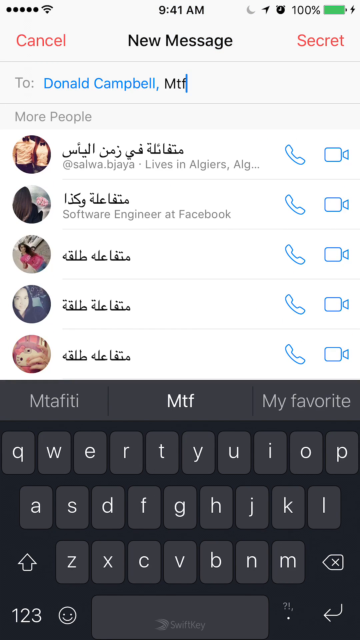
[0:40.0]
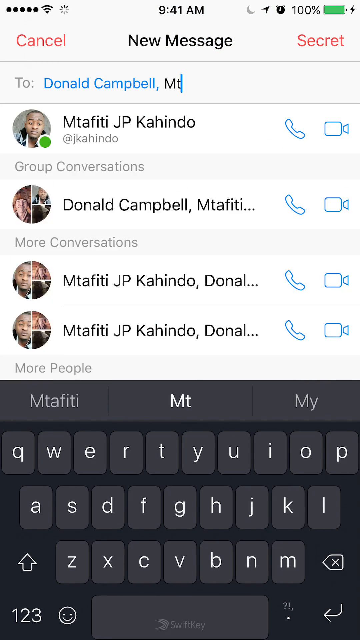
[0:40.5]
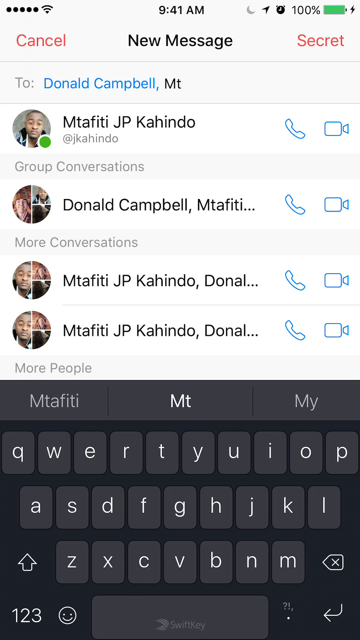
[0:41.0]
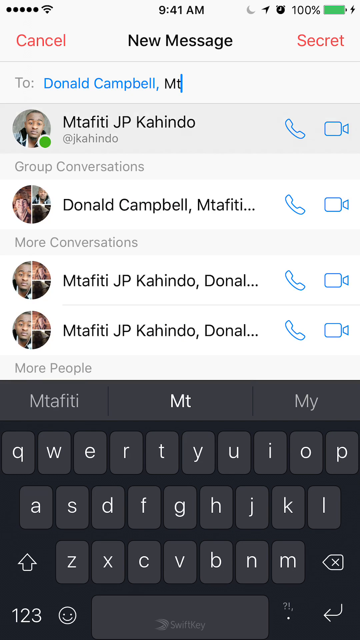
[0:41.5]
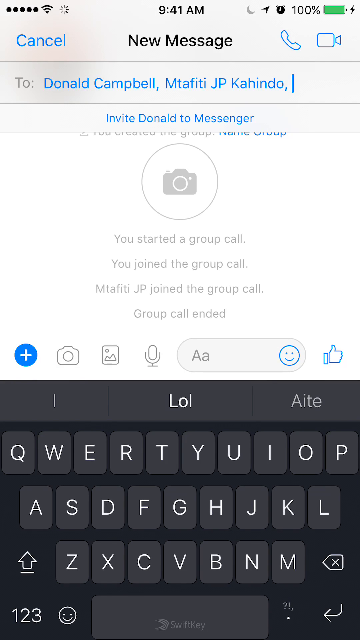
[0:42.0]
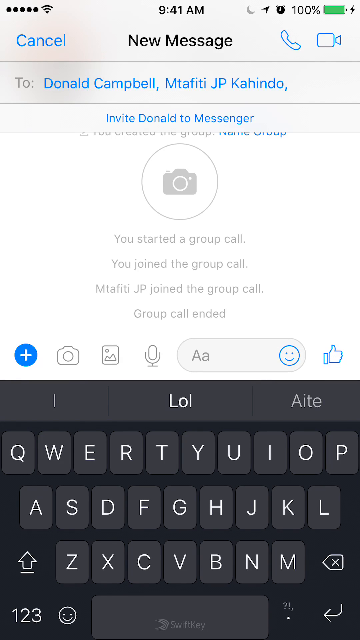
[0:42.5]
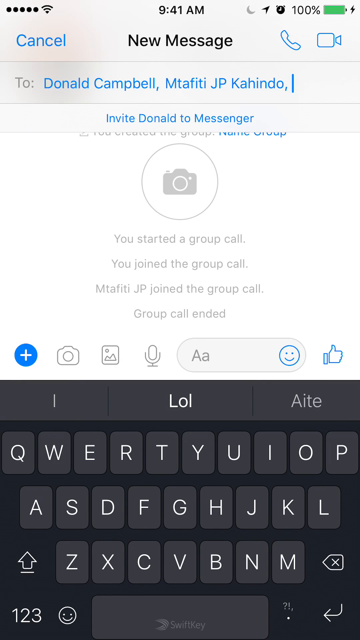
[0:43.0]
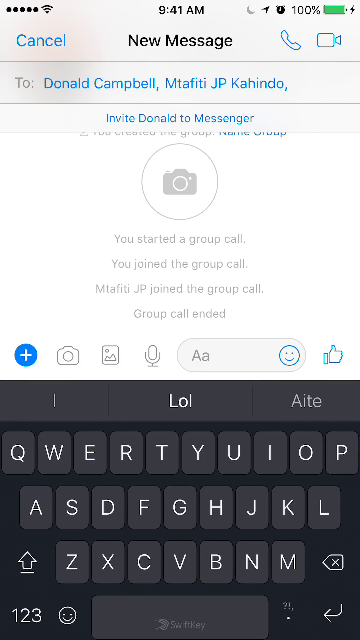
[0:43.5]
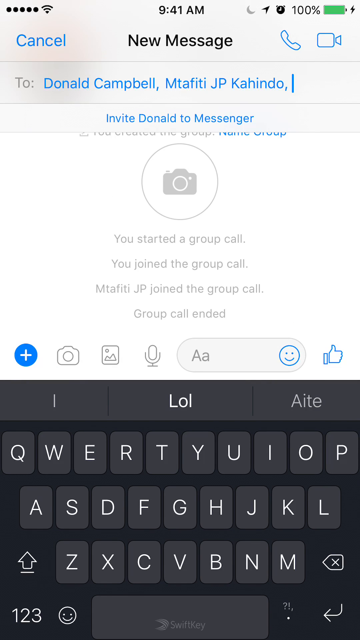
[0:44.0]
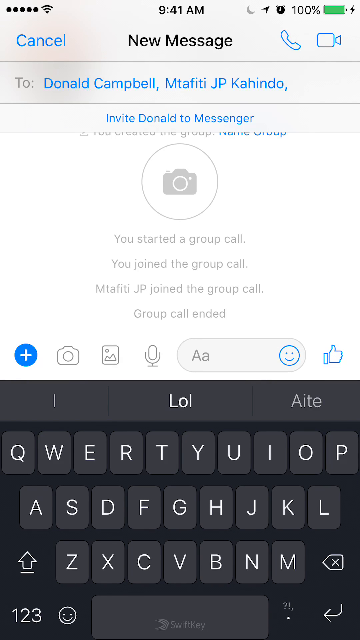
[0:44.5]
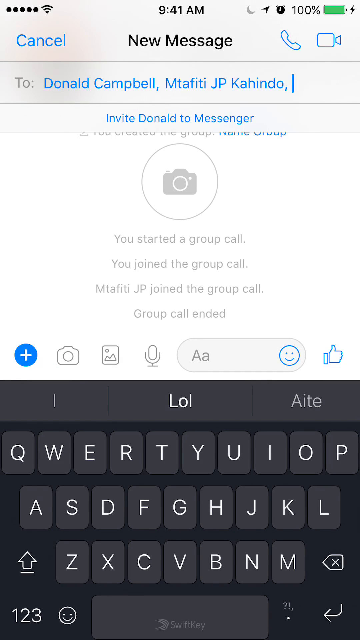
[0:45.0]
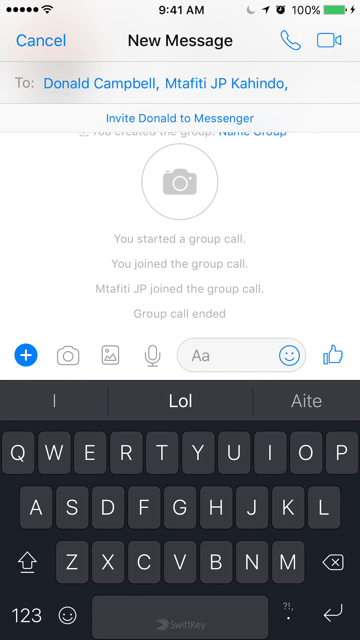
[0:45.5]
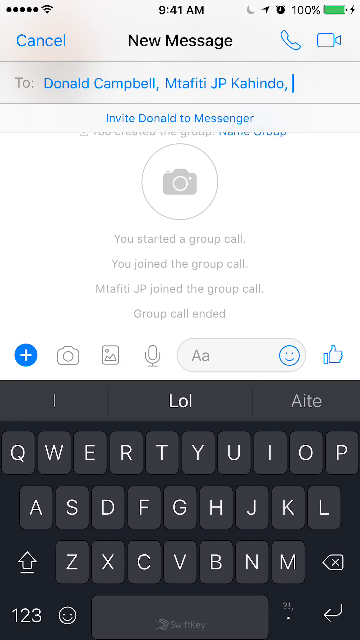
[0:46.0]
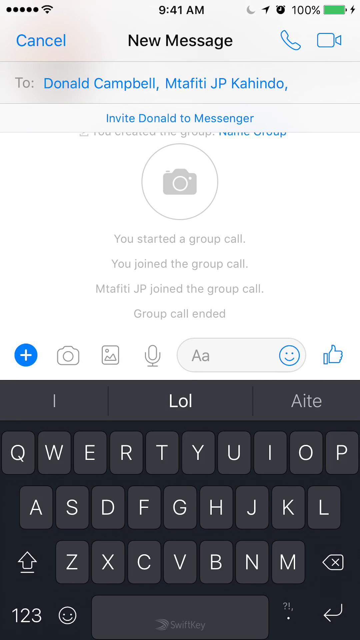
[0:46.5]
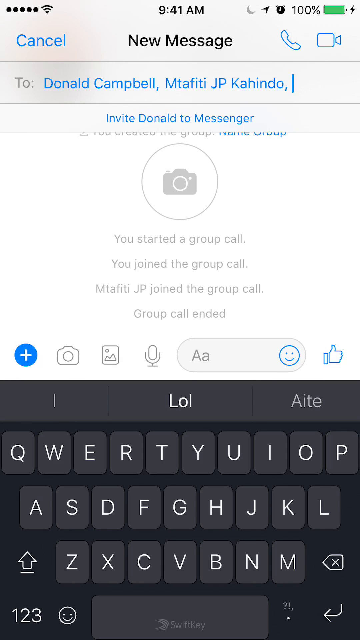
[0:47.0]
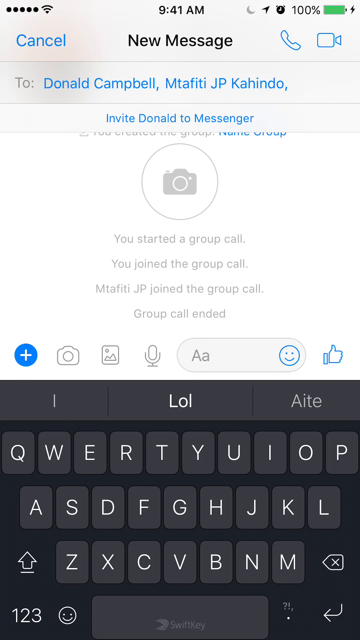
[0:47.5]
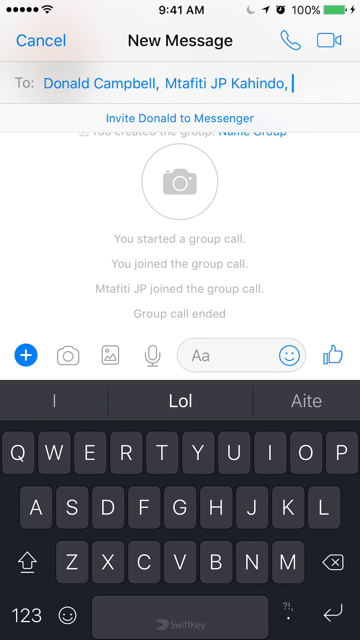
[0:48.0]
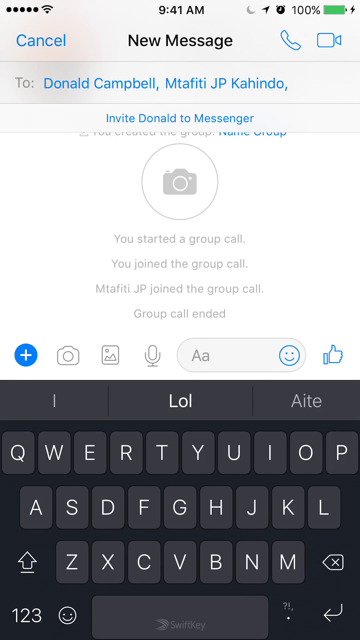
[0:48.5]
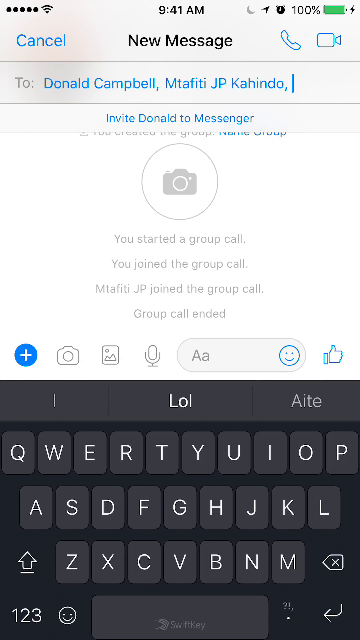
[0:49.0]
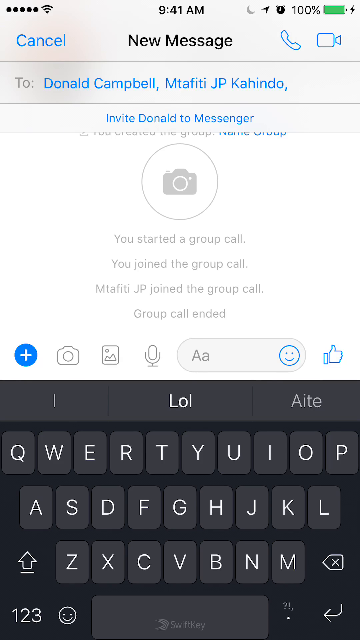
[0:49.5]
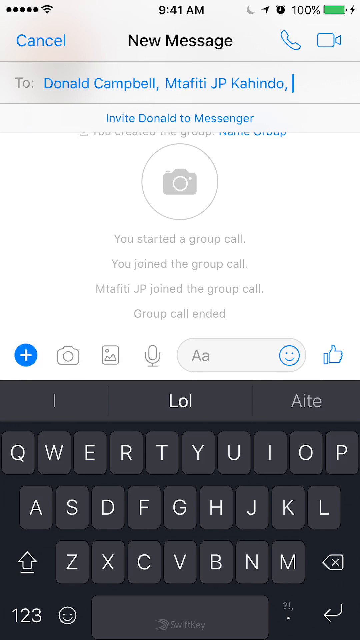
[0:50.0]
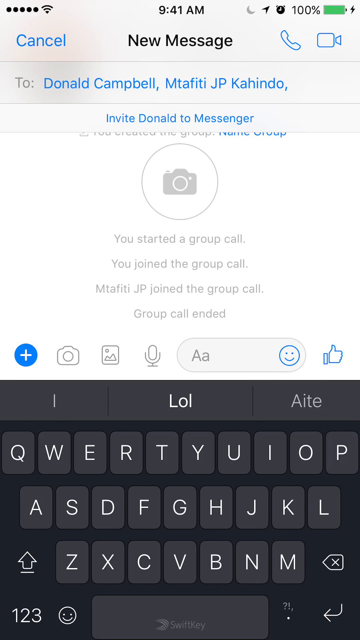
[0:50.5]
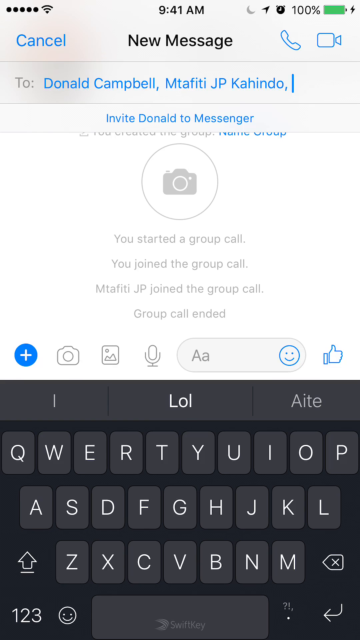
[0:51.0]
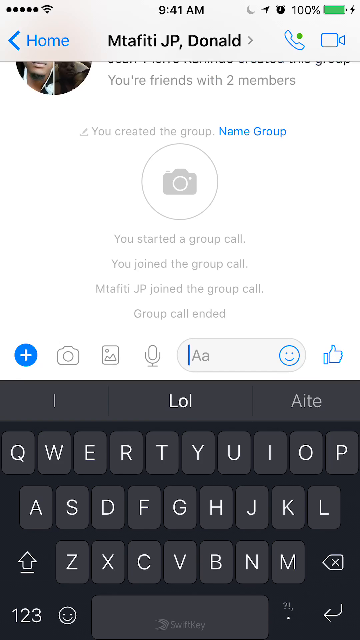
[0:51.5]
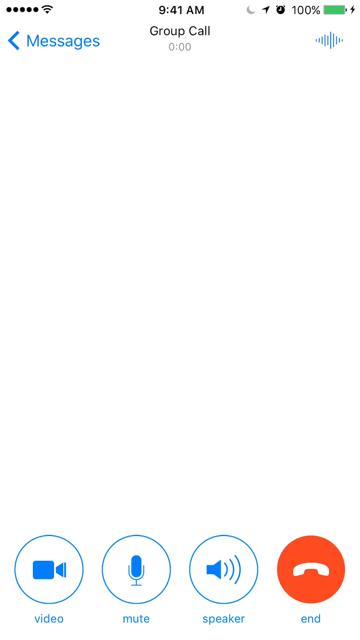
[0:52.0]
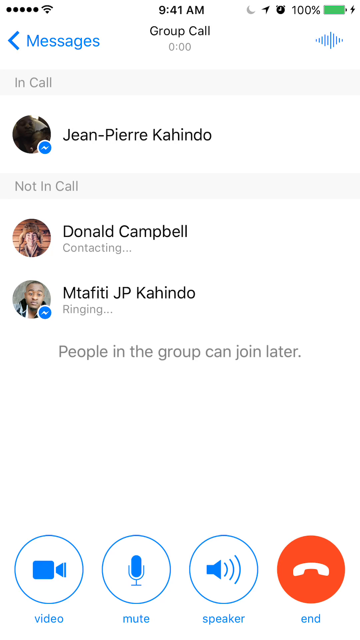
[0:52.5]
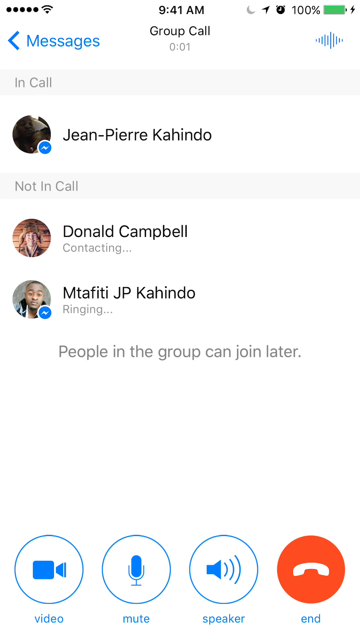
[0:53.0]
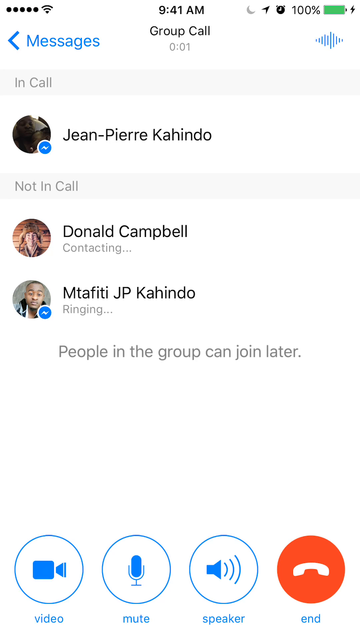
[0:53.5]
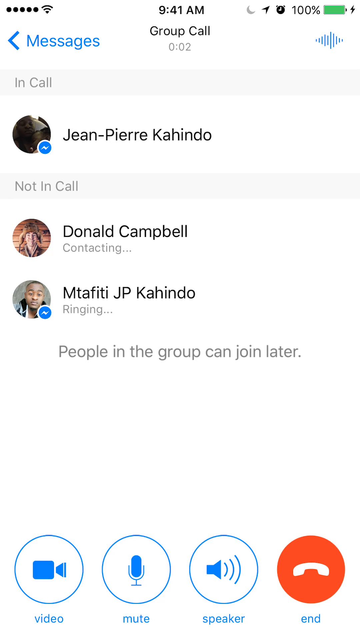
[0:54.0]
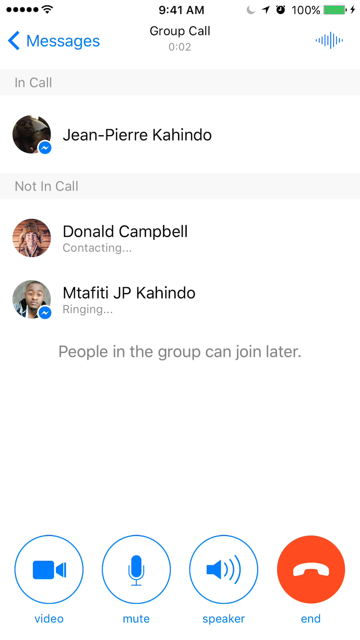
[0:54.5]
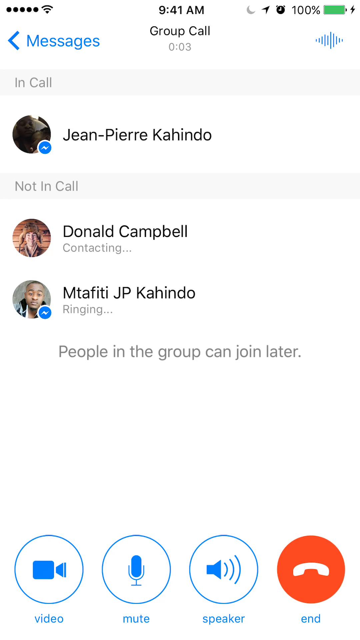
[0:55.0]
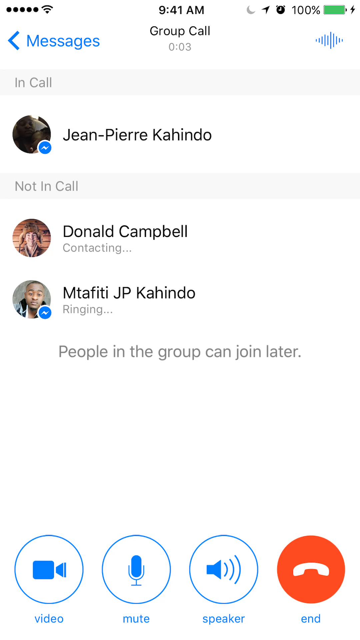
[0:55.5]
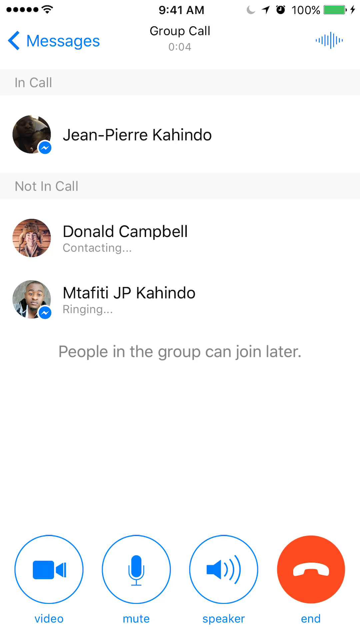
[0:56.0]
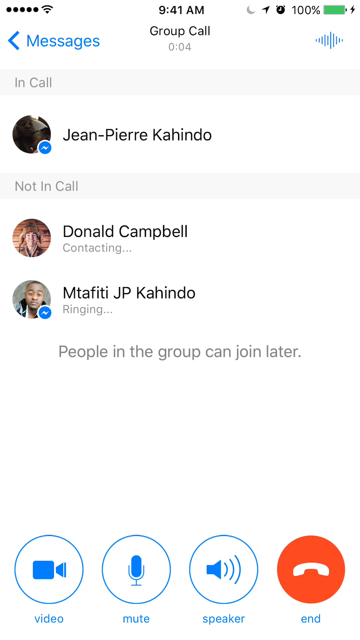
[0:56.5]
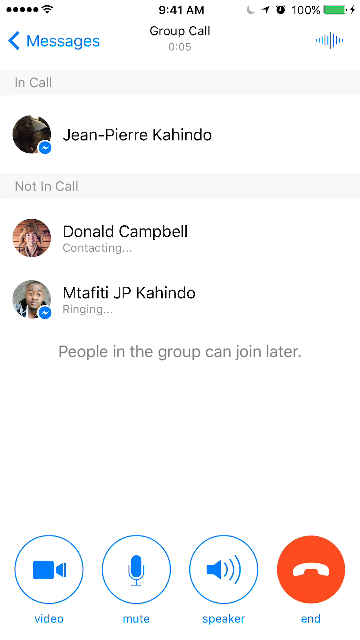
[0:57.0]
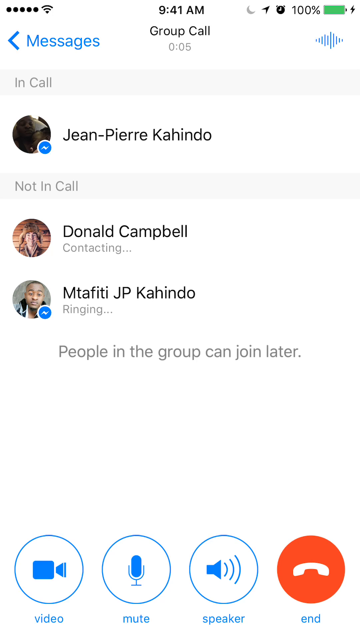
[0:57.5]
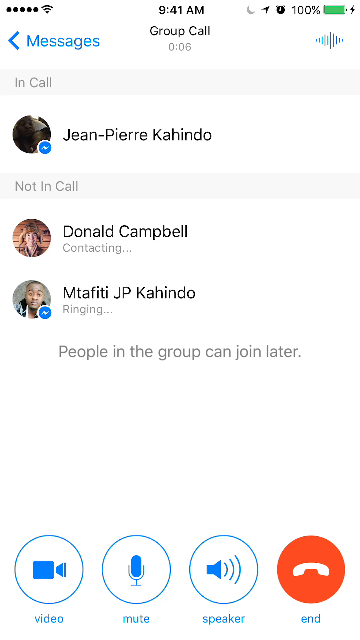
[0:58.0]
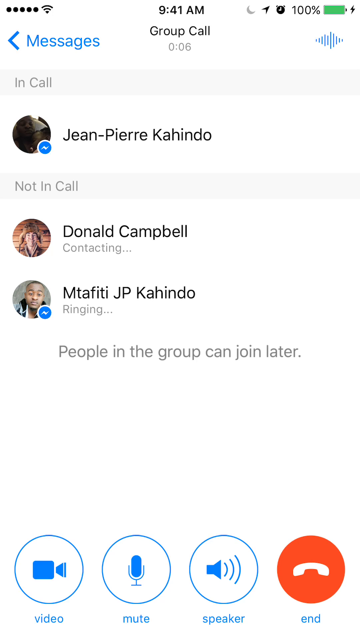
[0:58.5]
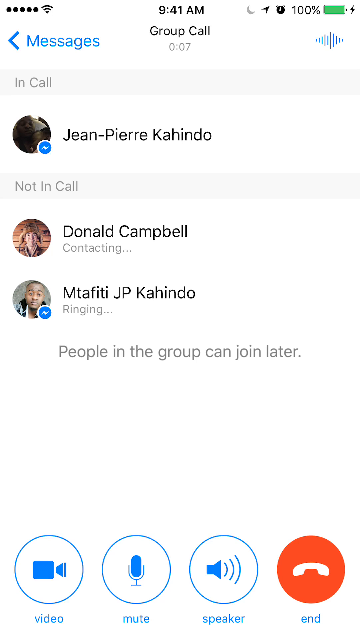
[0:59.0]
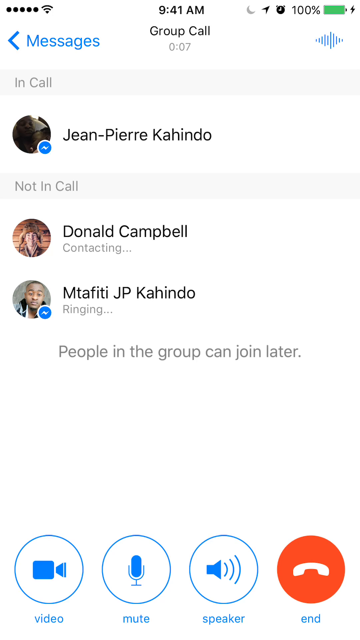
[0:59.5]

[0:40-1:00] The Messenger app shows a new message screen, with the person adding several recipients. "Cancel" is at the top left and "secret" at the top right. Along the very top are full signal on the left, 9:41 AM in the center and 100% battery charge on the right. Donald Campbell has already been added to the "to" section, and "MTF" is being typed, with the cursor right after it. Lower down is text meaning "more people," written in a different language, and a keyboard is at the very bottom. The person types "MTA", sees Matafiti, and taps his image, adding him to the "to" section, and the screen stays like that for a while. Underneath appear "invite Donald to messenger", a camera with a circle around it, and the lines "you started a group call", "you joined the group call", "Mita JP joined the group call" and "group call ended". After a while the screen changes to one showing "in call" with Jean-Pierre Cahindo, and below it "not in call", with Donald Campbell "contacting" and Mitafiti JP Cahindo "ringing". Underneath is "people in the group can join later", and at the very bottom are a camera symbol, a microphone symbol, a volume symbol and a red phone symbol. At the very top, a group call has started, and its timer counts from about six seconds to seven and then eight.